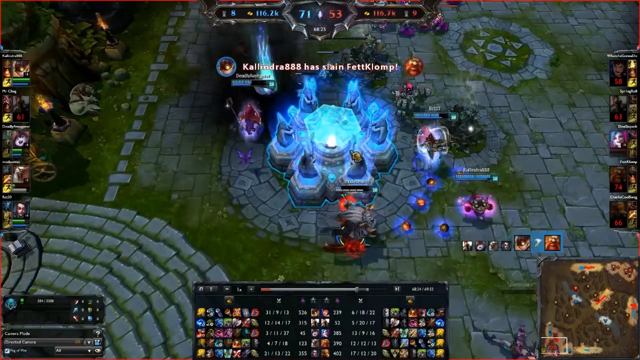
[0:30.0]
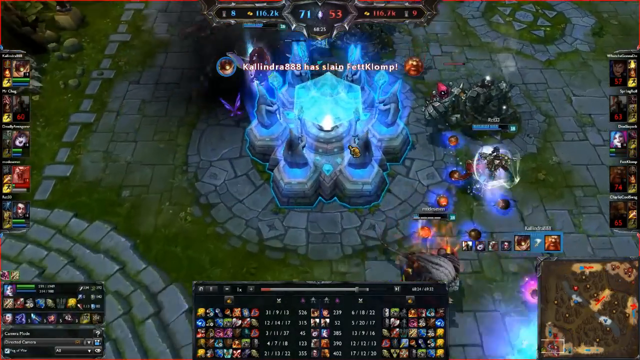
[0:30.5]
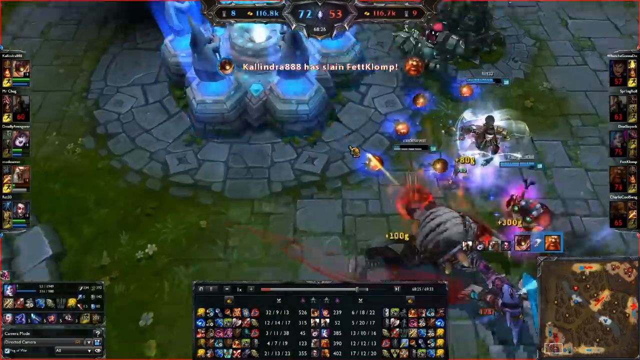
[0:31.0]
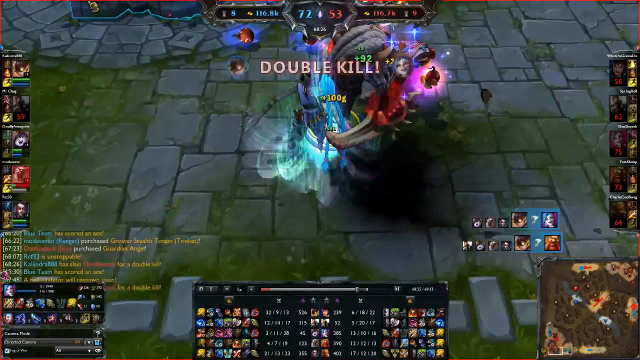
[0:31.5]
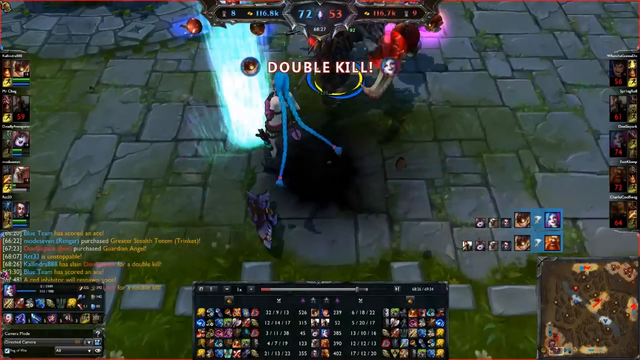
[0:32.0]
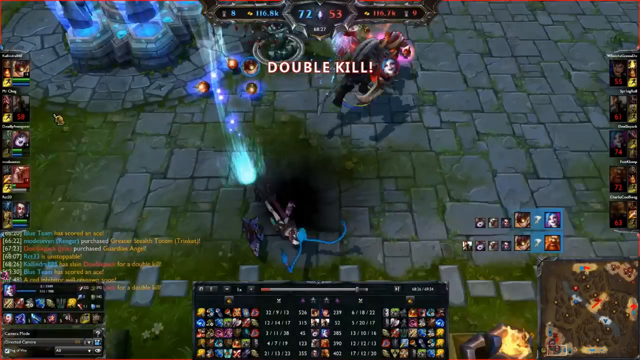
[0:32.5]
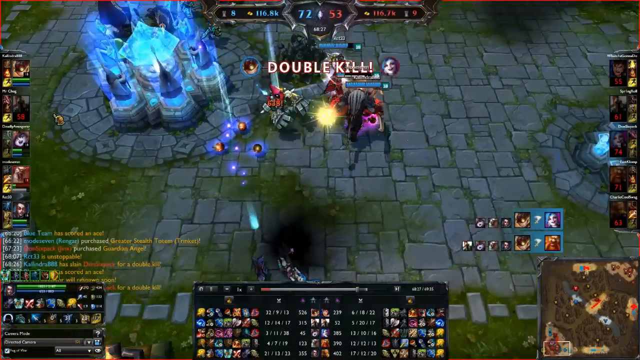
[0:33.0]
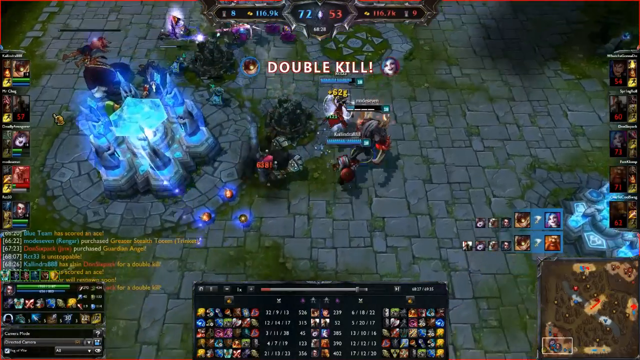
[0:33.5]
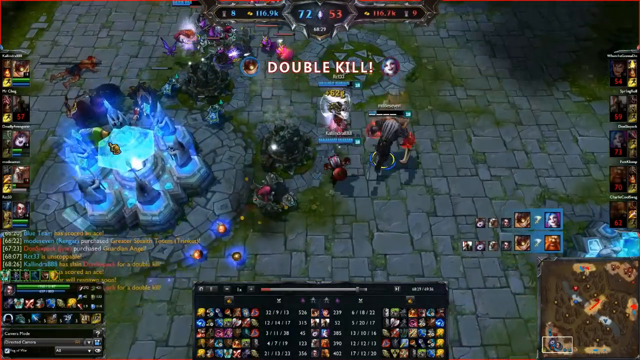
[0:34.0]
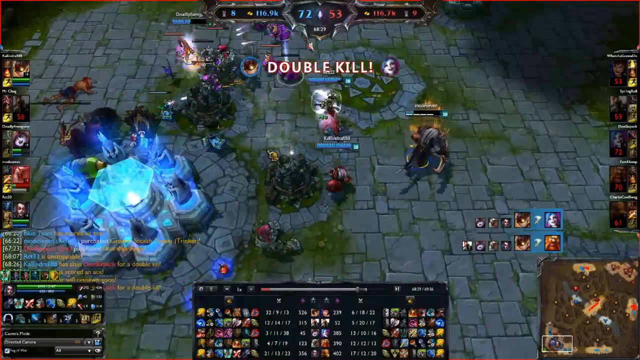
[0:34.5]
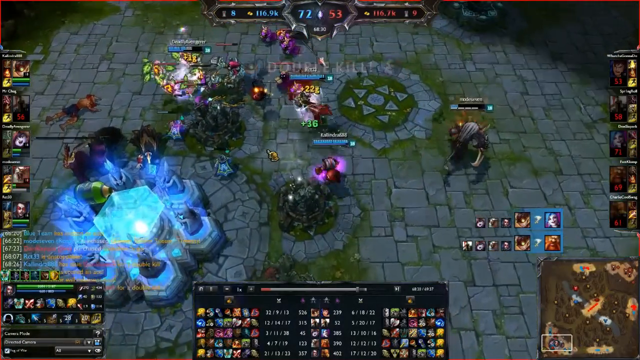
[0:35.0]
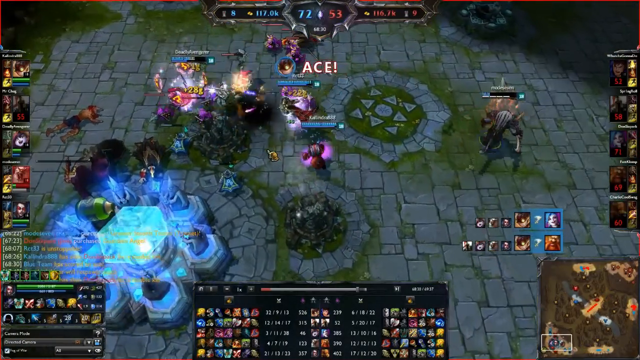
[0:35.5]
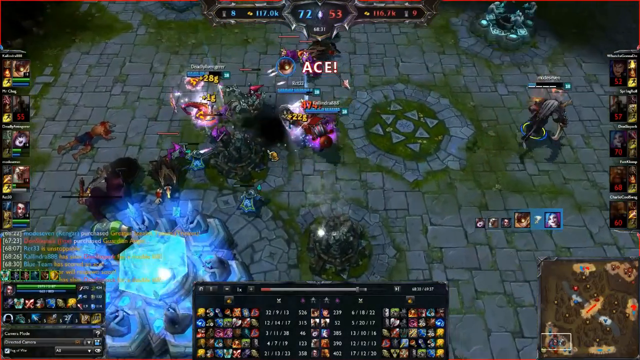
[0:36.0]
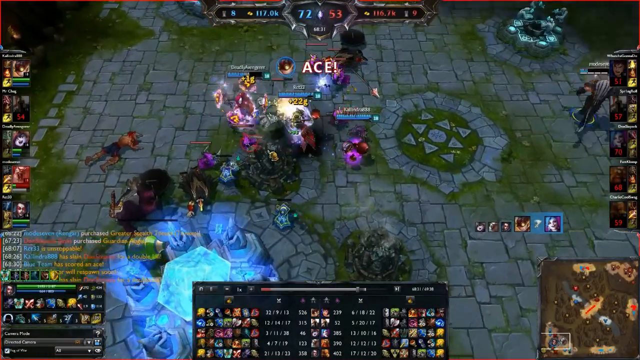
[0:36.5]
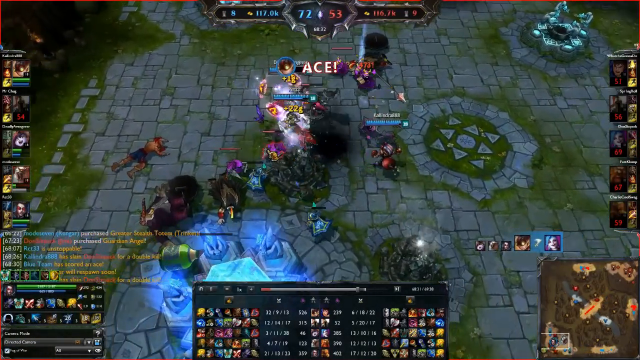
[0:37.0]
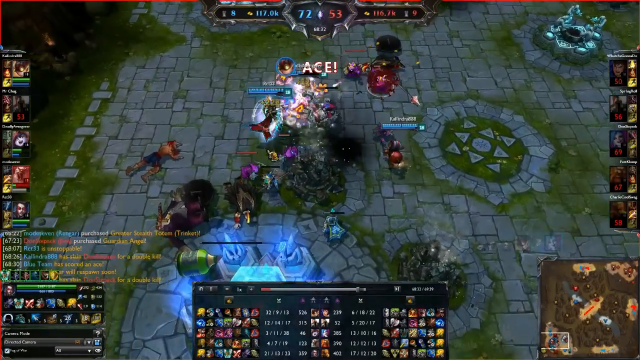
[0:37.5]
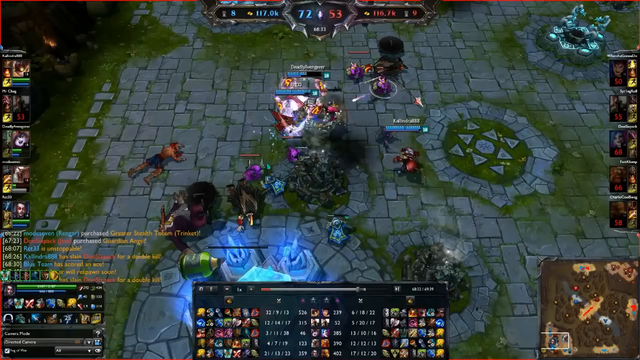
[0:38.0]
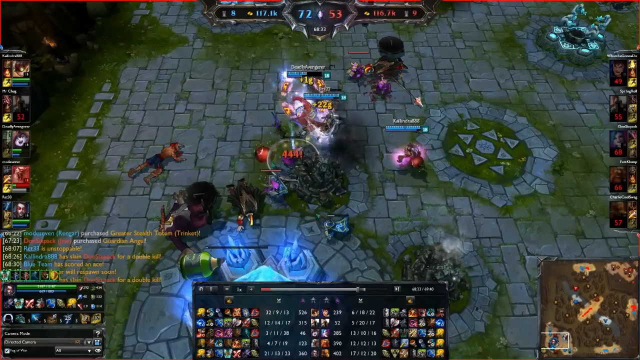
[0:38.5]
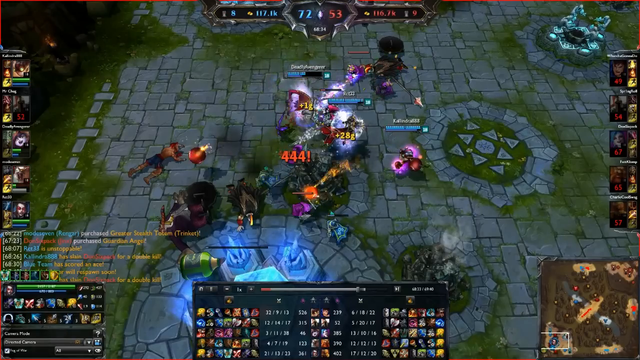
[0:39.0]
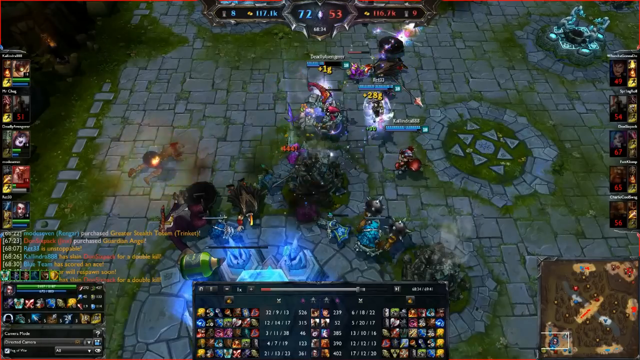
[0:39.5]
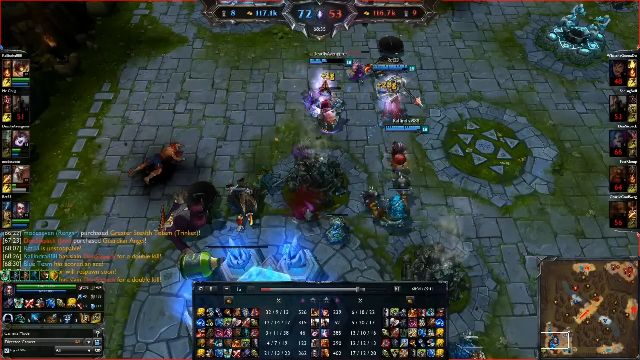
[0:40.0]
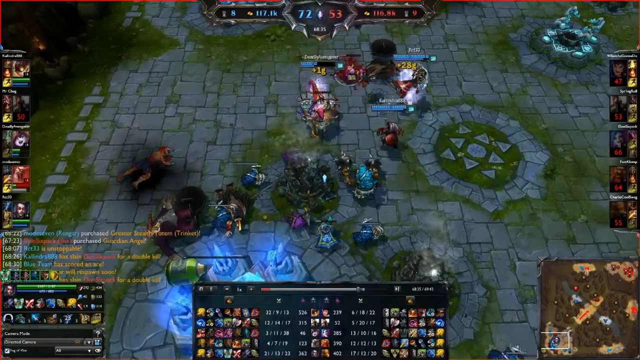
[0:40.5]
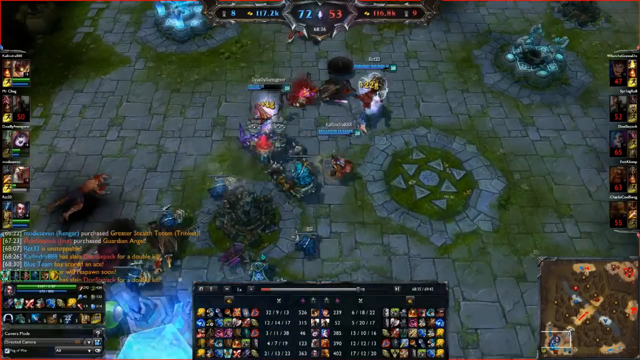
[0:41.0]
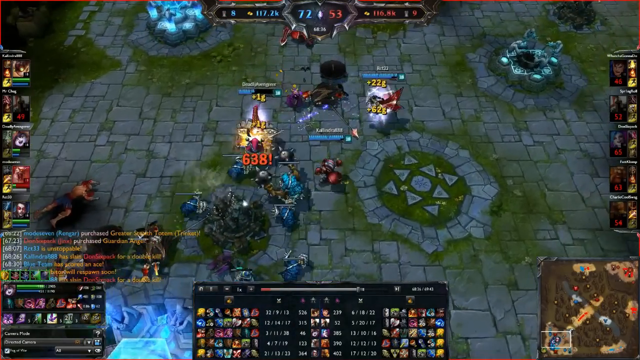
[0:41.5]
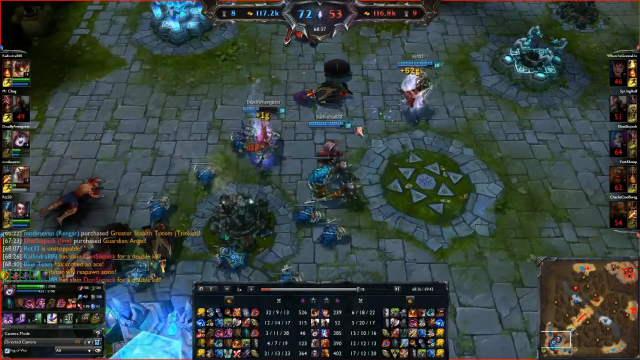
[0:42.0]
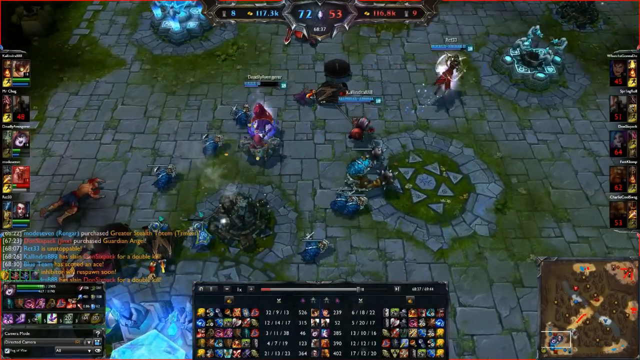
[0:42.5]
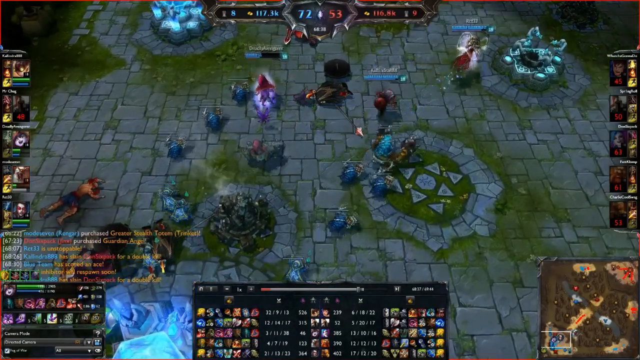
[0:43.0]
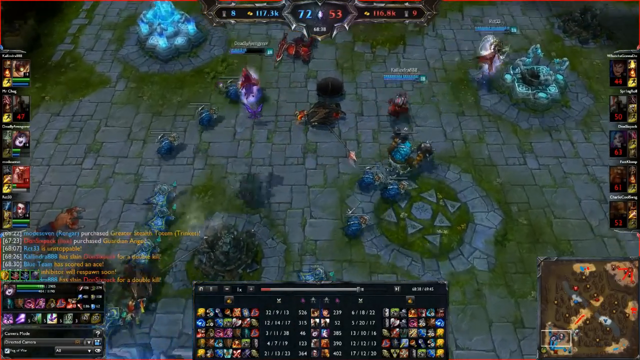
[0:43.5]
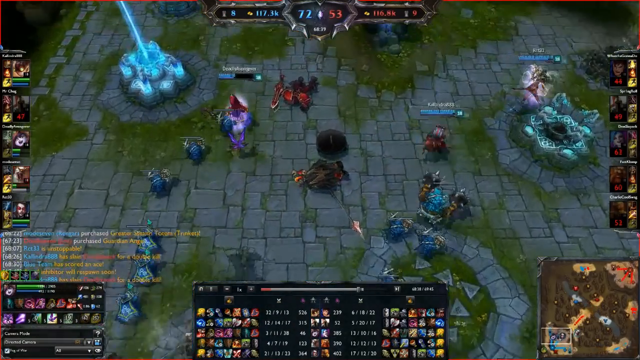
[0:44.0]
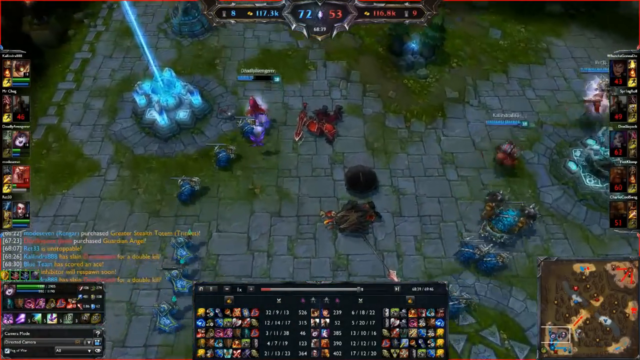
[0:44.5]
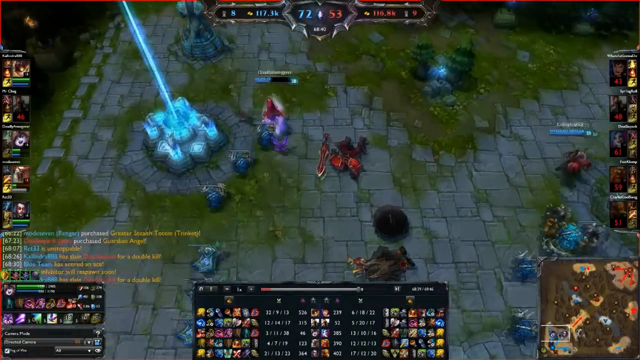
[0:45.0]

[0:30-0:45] The big blue gem is in the center, with six little lit-up, kind of concrete statues around it: two at the top, one to the left, one to the right, and two at the bottom. The player's character is below it, and enemies are up around the top and down the side. The ground is mostly grass with a little bit of brick concrete. He goes down to the right and attacks an enemy, and "double kill" appears on the screen. He then goes up toward the top, firing at enemies, killing some and taking life points from others. In the top right corner there is something like a big scorpion. He goes up to a big square with a light beam shooting off of it, while enemies chase behind him and he takes some of them out. Meanwhile the counter at the top goes up gradually as he gets points for killing enemies. He ends up a little above and to the right of the blue crystal, fighting various enemies, with numbers going up above people's heads as their life bars go down. A blue bar above everybody's head shows how much life they have left. The player on the right splits off to the right, and the character goes up to the left.